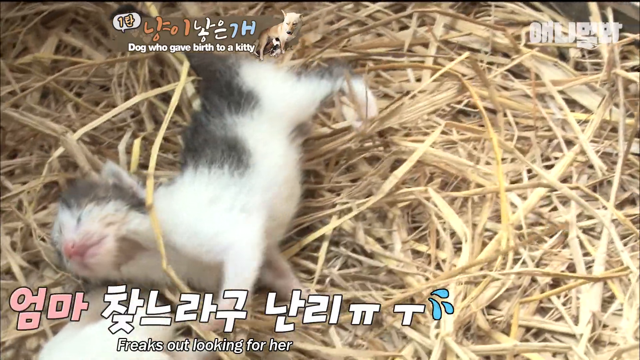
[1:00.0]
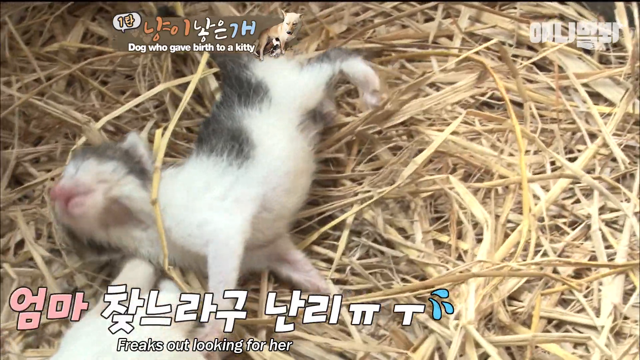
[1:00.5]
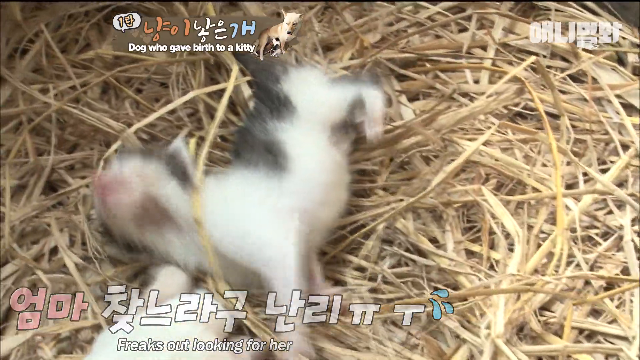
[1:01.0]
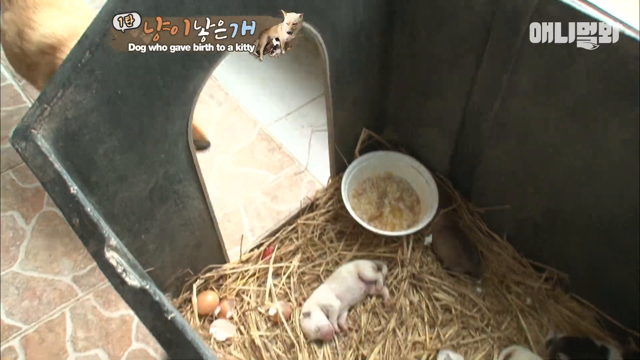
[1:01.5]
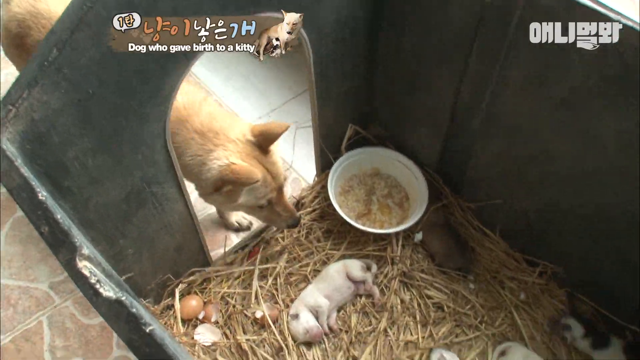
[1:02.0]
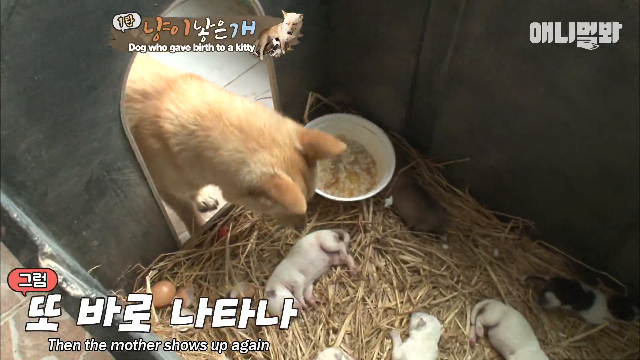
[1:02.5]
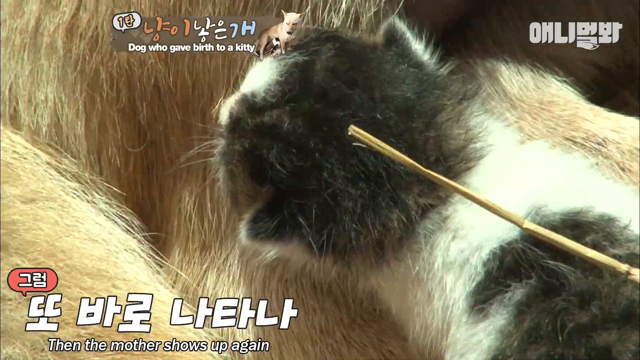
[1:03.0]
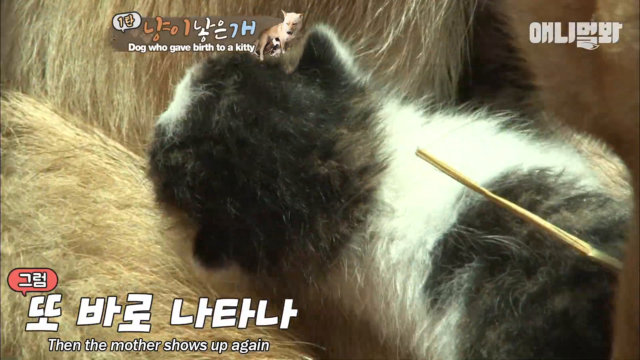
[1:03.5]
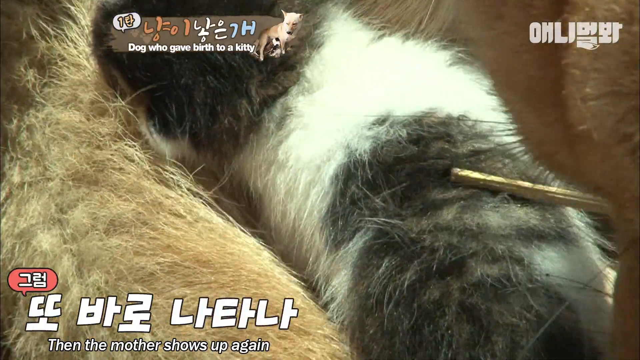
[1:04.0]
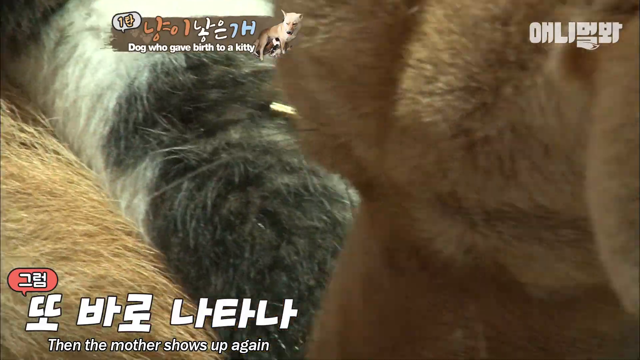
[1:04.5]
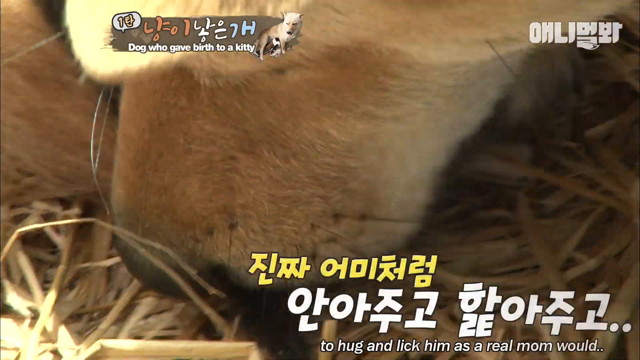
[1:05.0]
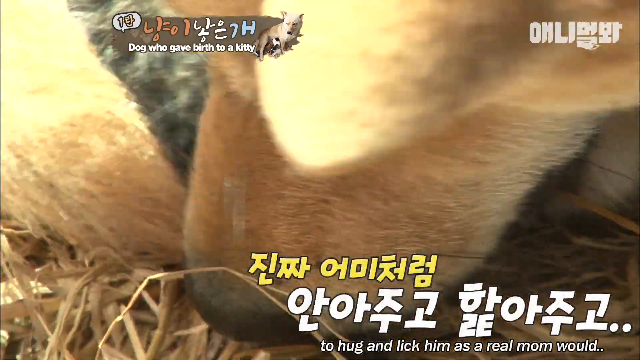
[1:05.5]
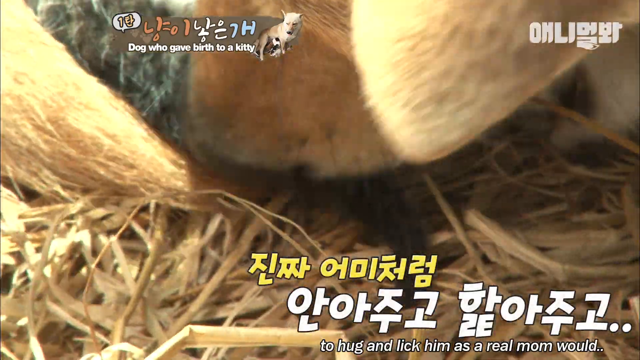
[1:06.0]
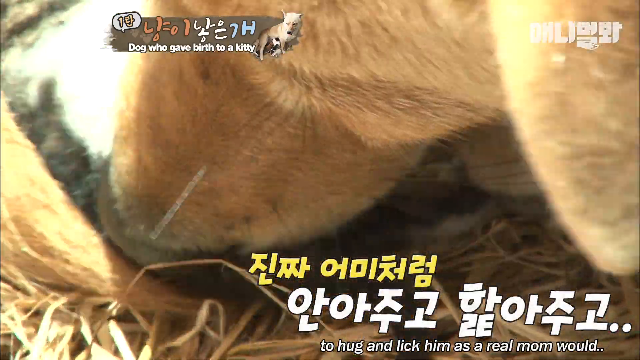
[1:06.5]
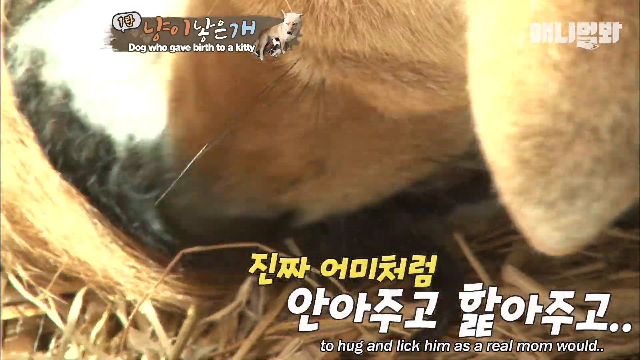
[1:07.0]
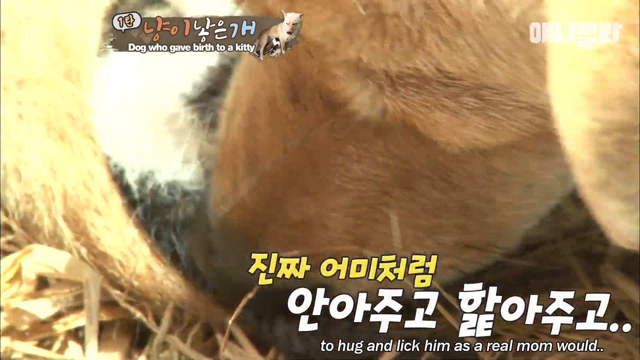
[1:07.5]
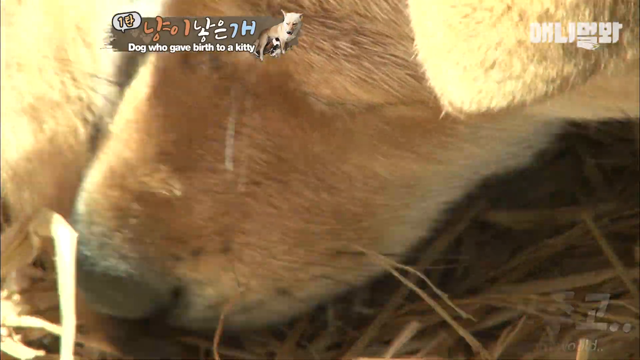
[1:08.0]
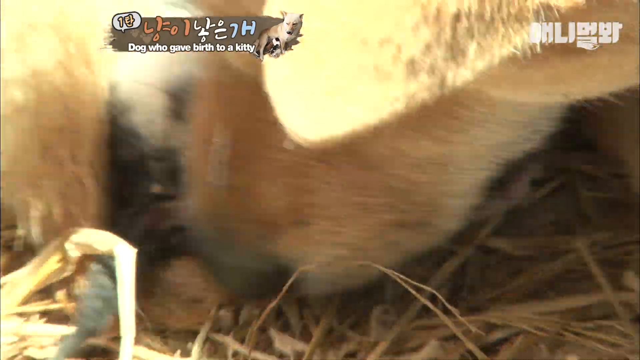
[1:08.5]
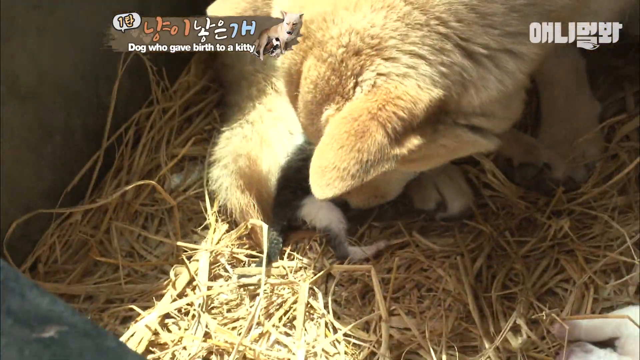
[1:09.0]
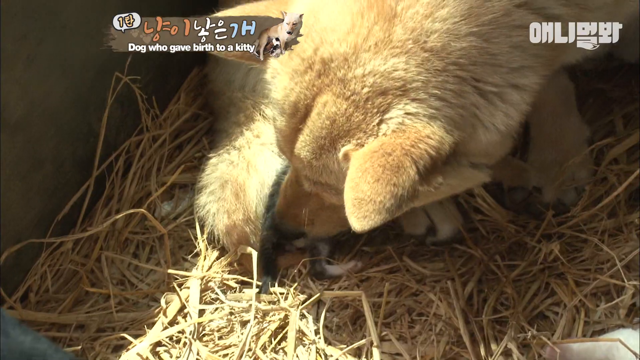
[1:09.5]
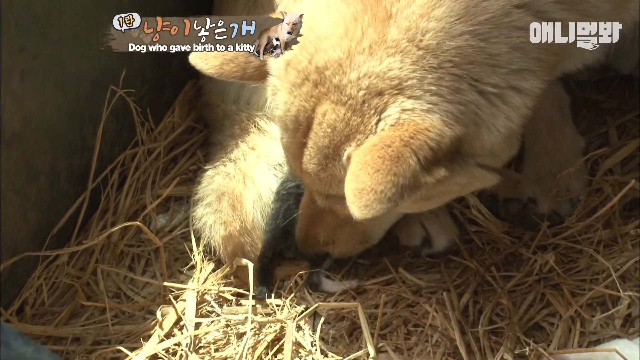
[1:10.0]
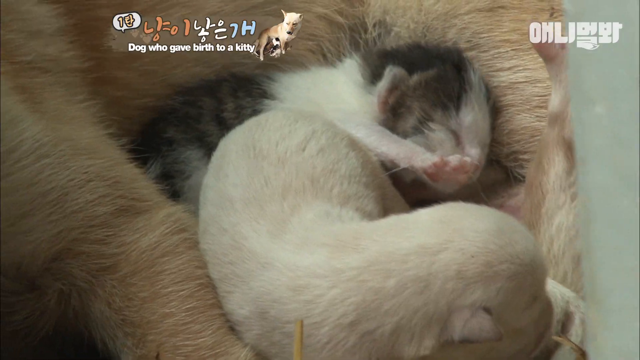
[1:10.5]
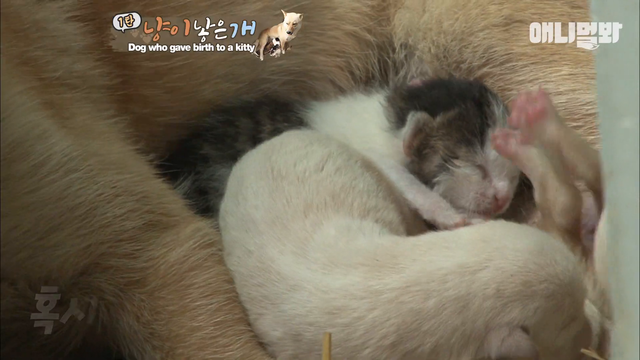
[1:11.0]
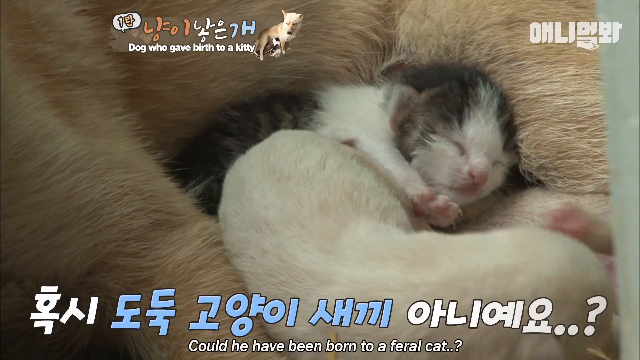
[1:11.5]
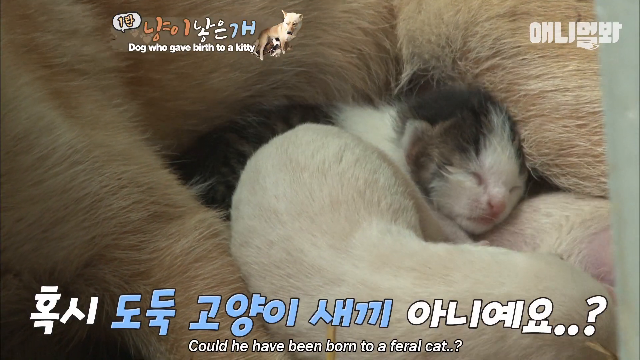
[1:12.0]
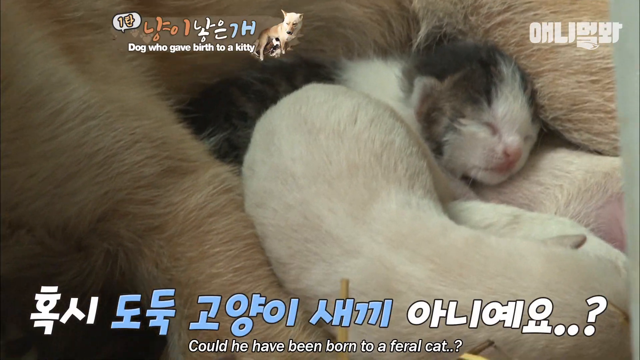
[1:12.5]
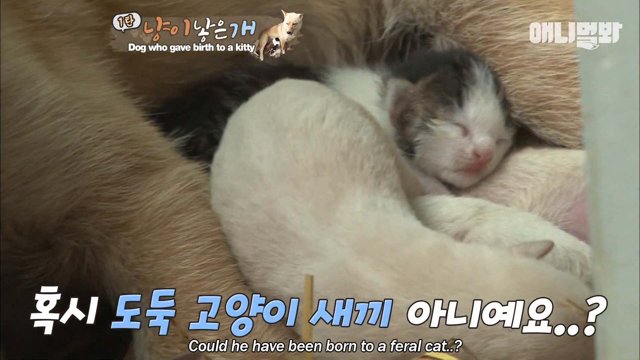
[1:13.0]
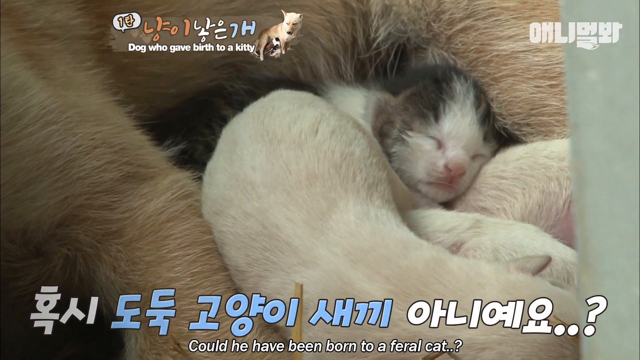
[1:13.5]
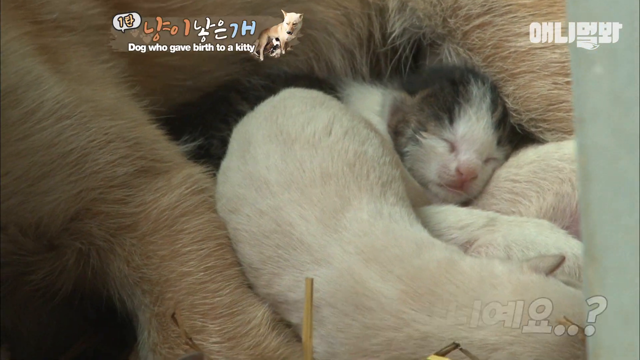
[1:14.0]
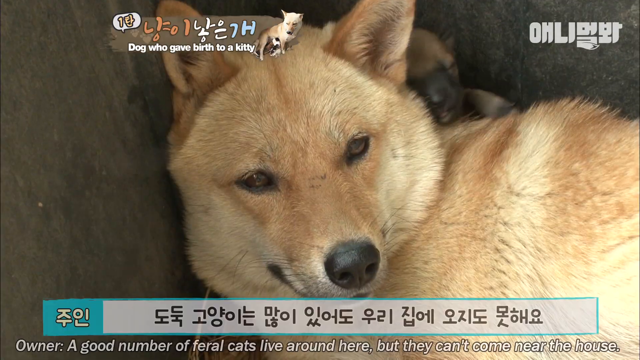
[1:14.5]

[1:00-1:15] Several puppies and an adult dog, which the subtitles describe as the mother, are in an enclosure with straw bedding, lying next to each other and moving around. The kitten cuddles up to the adult dog. Chinese and English subtitles say that the kitten could have been born from a feral cat and that, living with them since birth, it has sort of bonded with the dogs despite being a different species. Different angles are shown, all of the same enclosure with the same animals. At one point the adult dog seems to be licking and nursing the kitten as it sleeps with the other puppies.